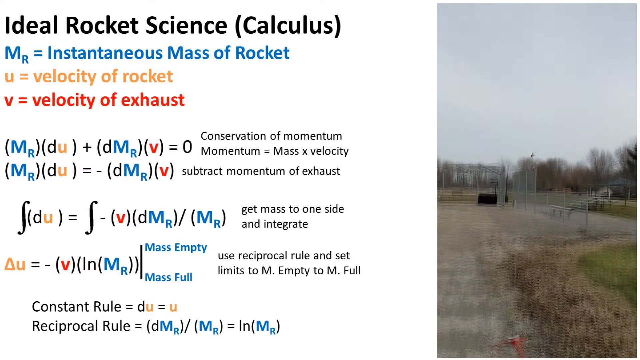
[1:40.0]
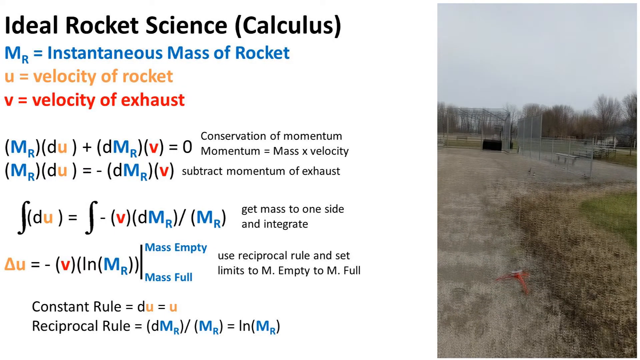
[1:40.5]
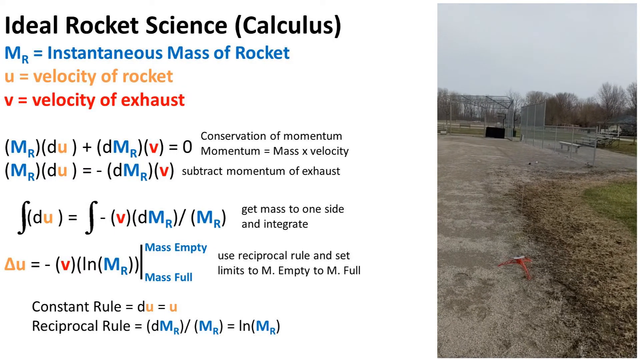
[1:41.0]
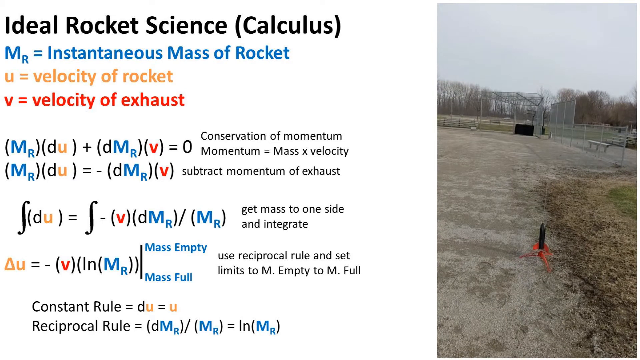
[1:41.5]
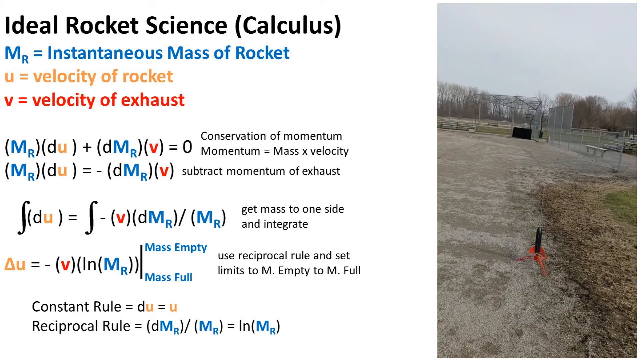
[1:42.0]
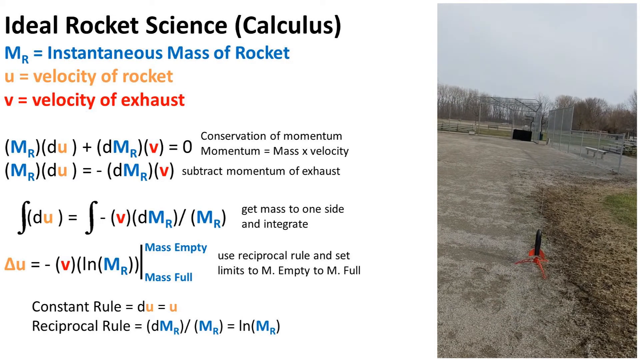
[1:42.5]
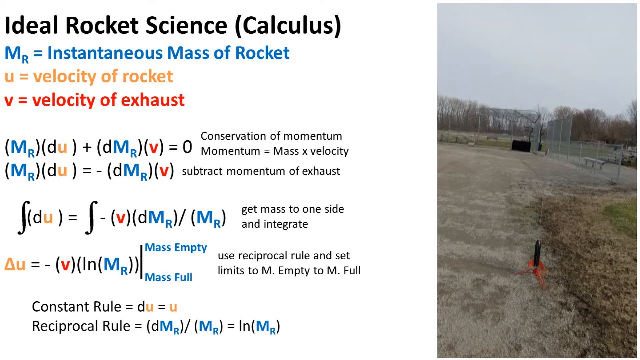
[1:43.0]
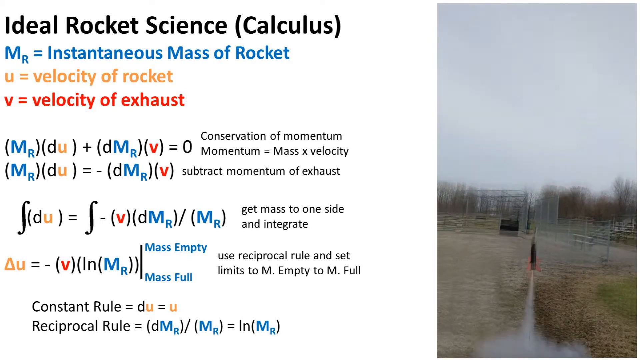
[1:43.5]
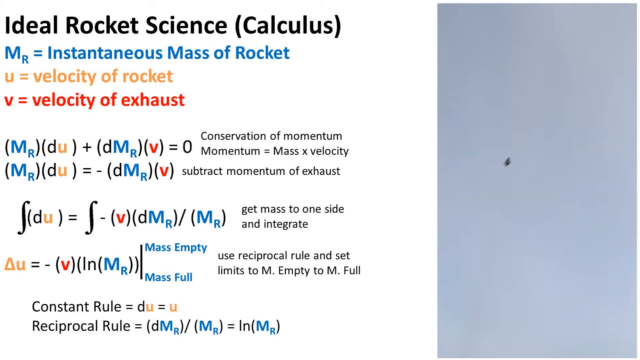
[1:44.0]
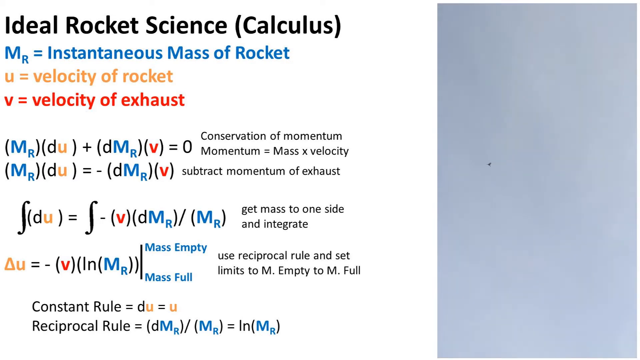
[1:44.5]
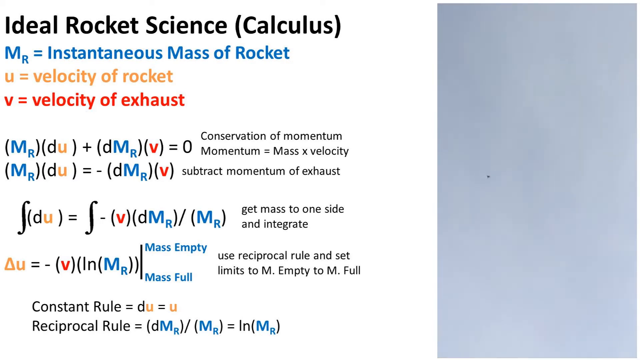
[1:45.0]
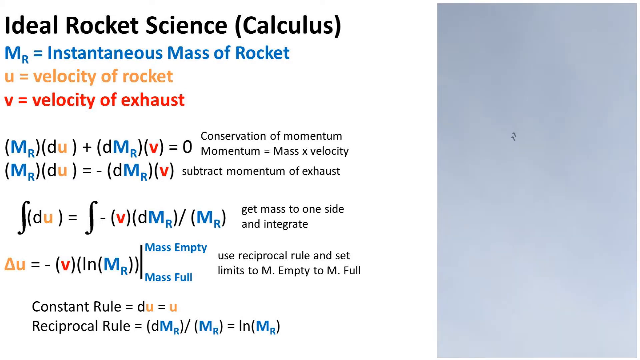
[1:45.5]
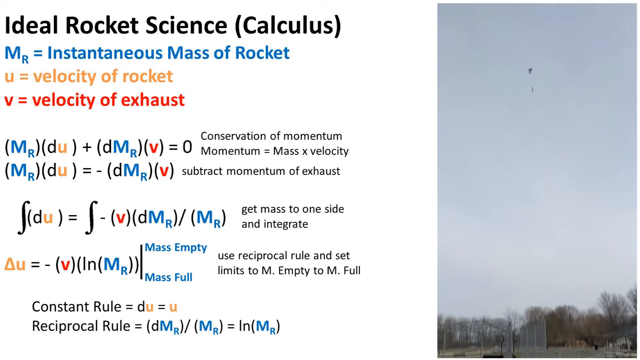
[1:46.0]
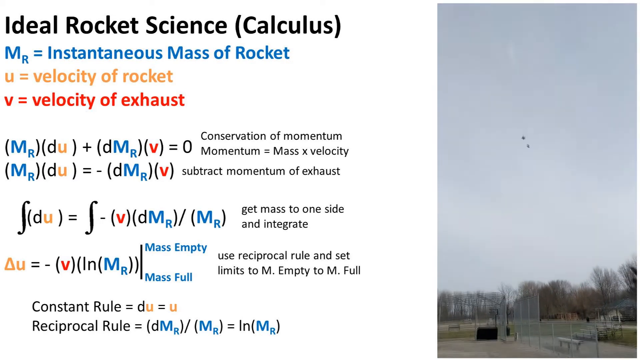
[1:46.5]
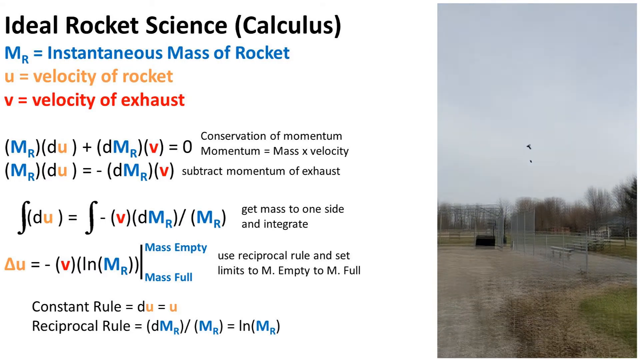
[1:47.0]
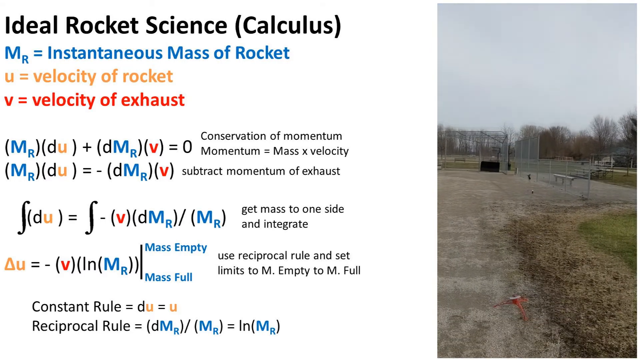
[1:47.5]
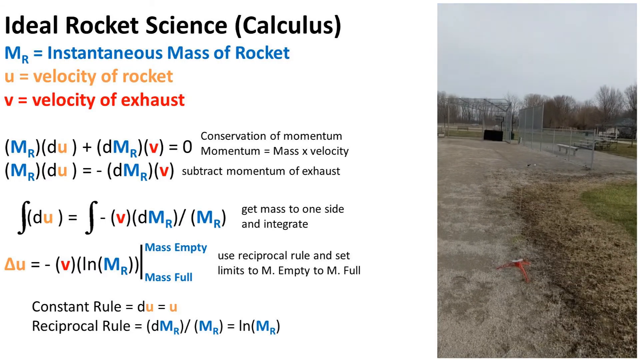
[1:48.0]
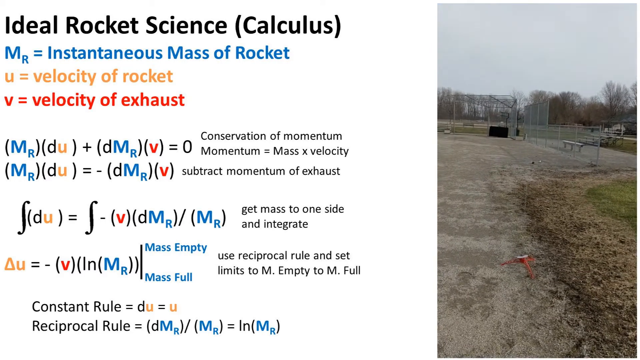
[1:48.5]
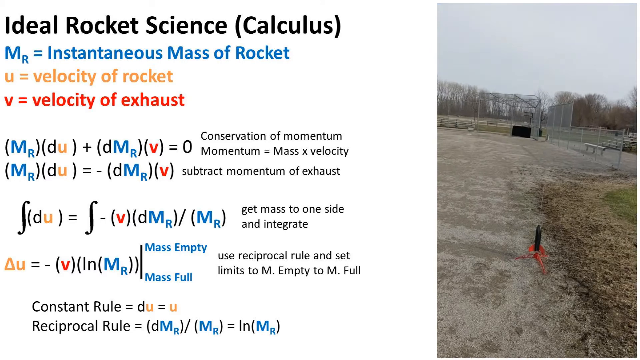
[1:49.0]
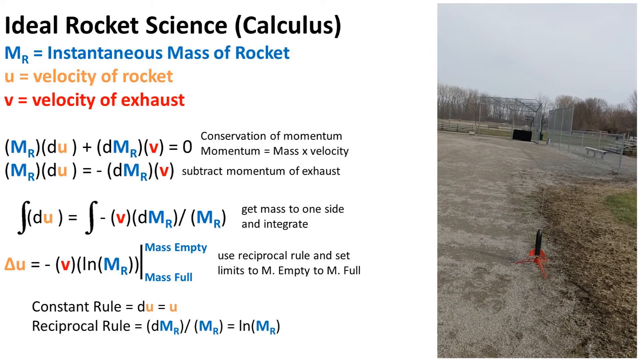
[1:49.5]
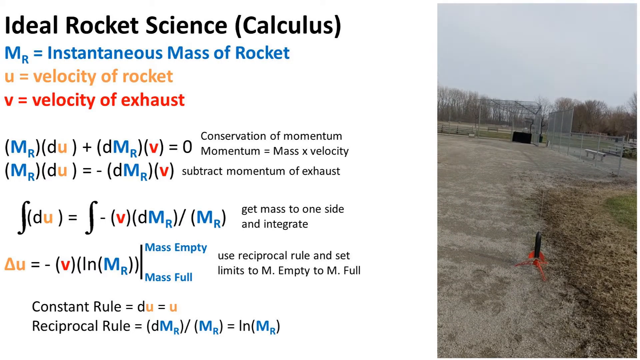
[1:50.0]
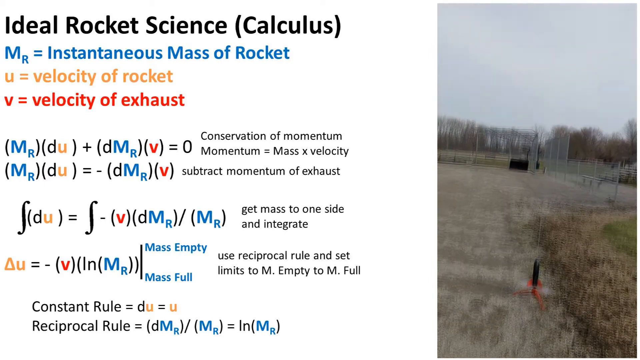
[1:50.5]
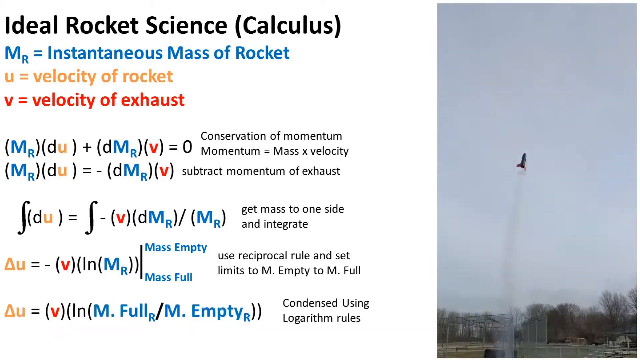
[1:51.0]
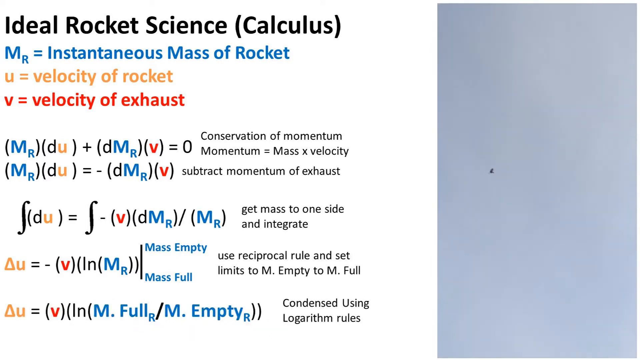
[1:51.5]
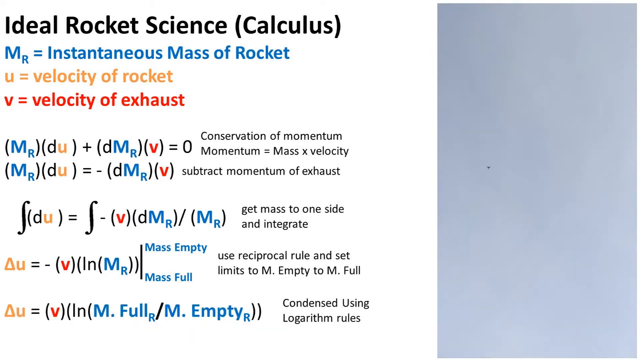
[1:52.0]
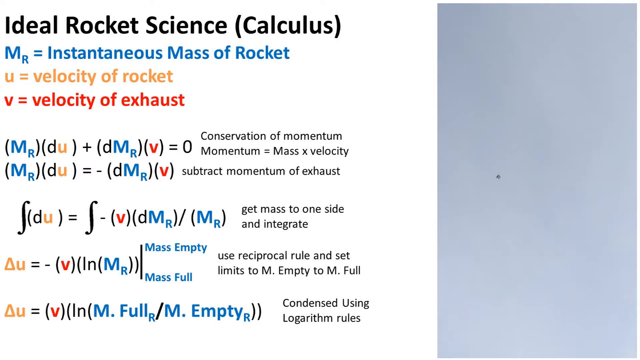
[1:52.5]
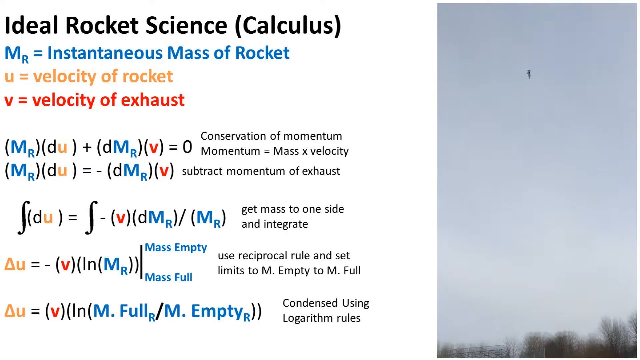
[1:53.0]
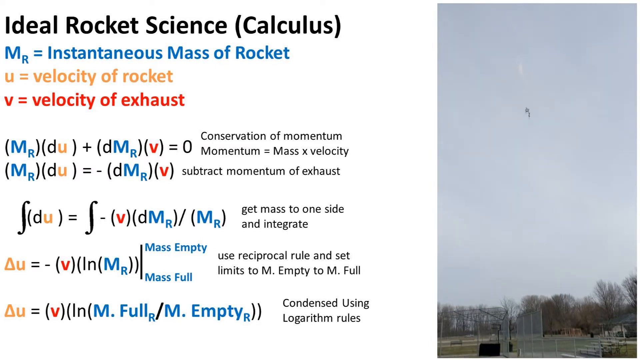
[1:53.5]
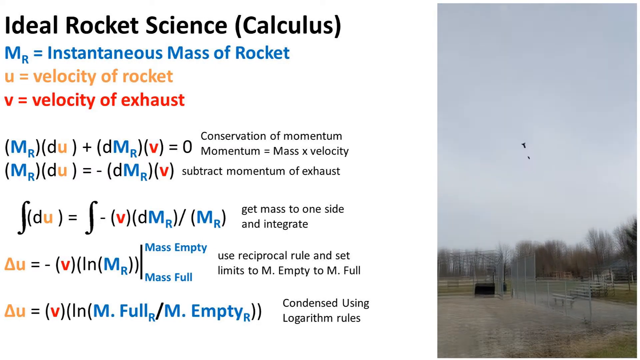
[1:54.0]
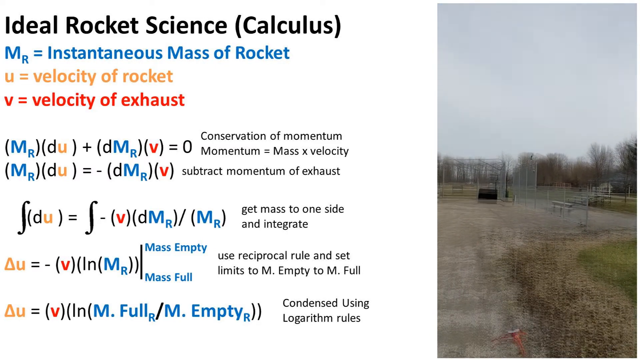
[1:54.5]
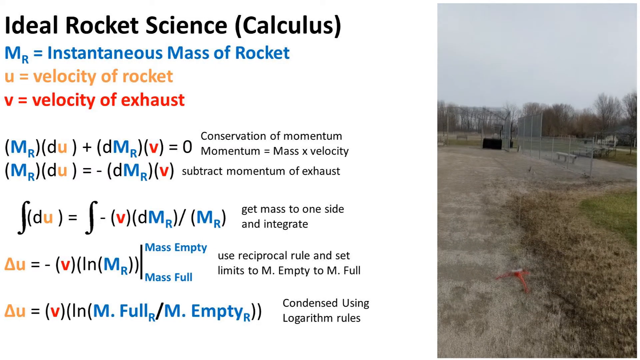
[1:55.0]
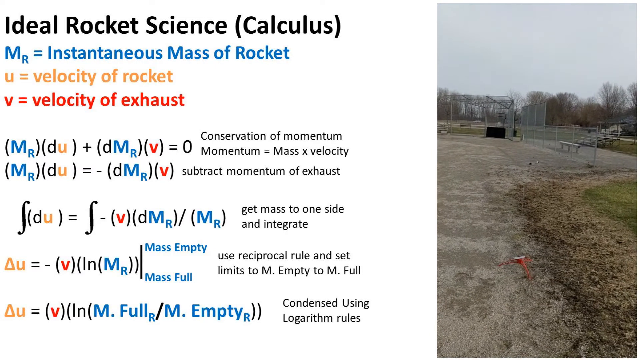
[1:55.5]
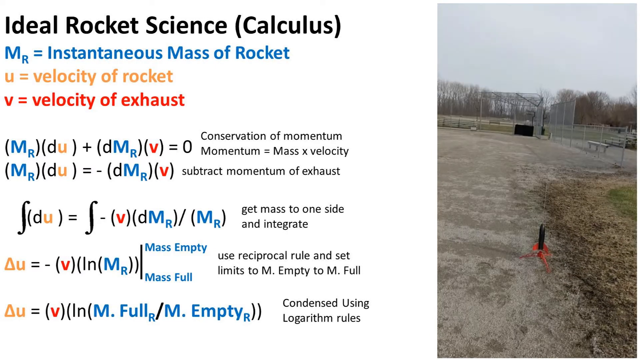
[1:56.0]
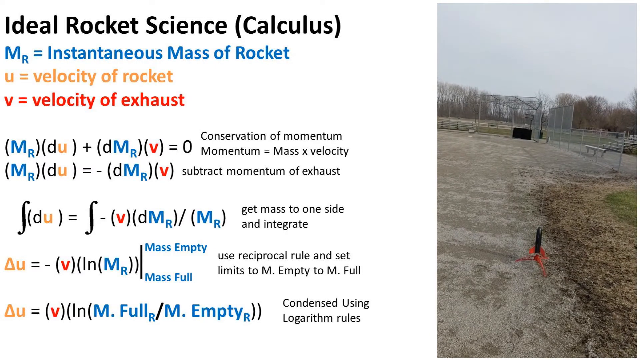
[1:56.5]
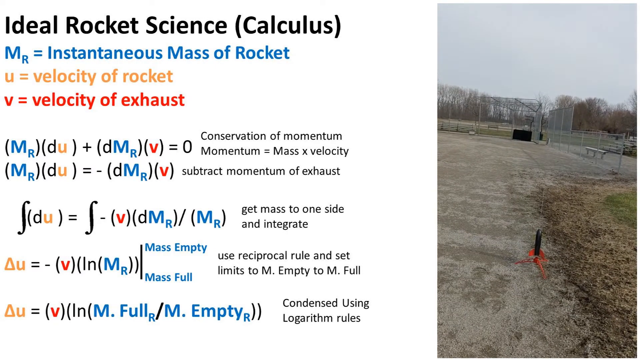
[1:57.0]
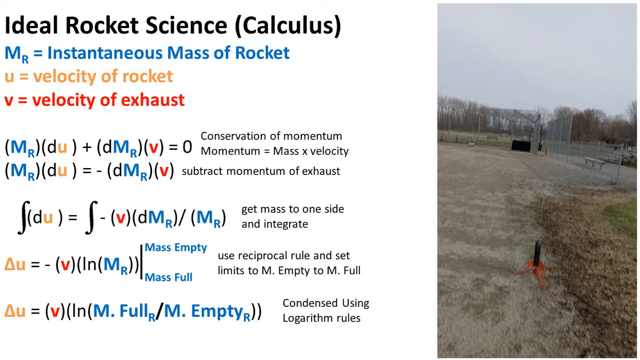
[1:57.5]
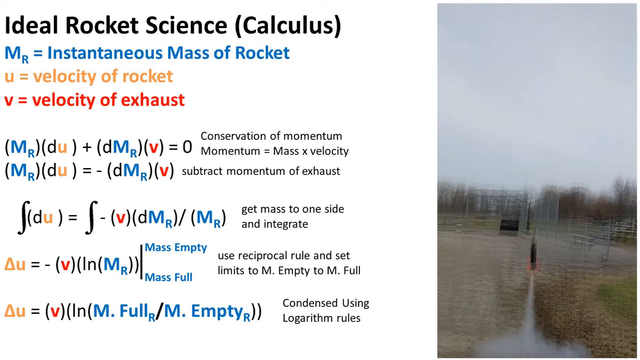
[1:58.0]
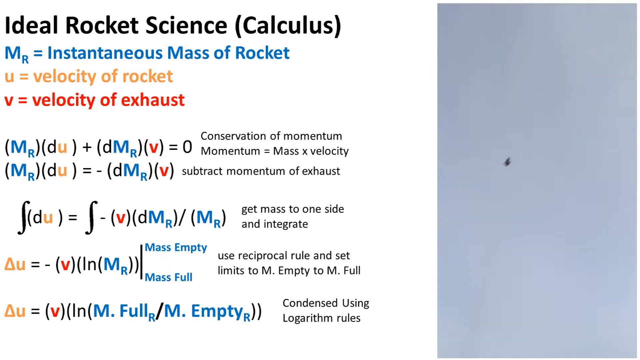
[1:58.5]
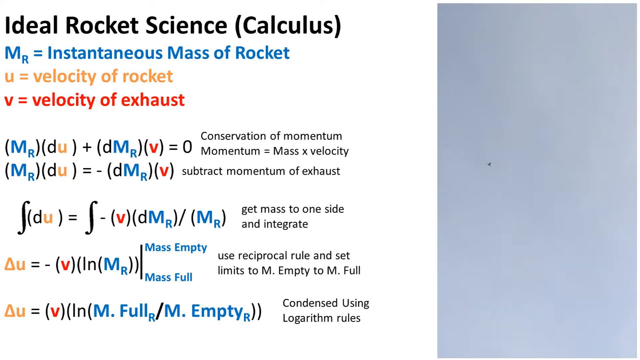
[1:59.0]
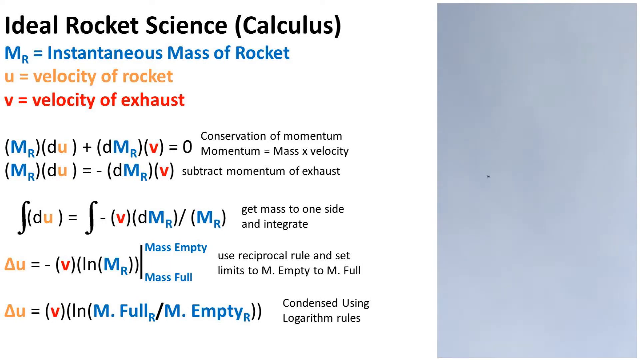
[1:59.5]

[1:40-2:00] A looping vertical video of a rocket flying into the air plays on the right side of the screen. The left side, covering two-thirds of the screen, is a white background with text over it. Text at the top right reads "Ideal Rocket Science", with three color-coded variables below it: the mass of a rocket, the velocity of a rocket, and the velocity of exhaust. Below those is a conservation of momentum equation, set up as momentum equals mass times velocity, with calculations running through three steps of an order of operations that isolate velocity. At the bottom of the screen are a constant rule and a reciprocal rule, which halfway through are replaced with a simplified version condensed using logarithm rules.